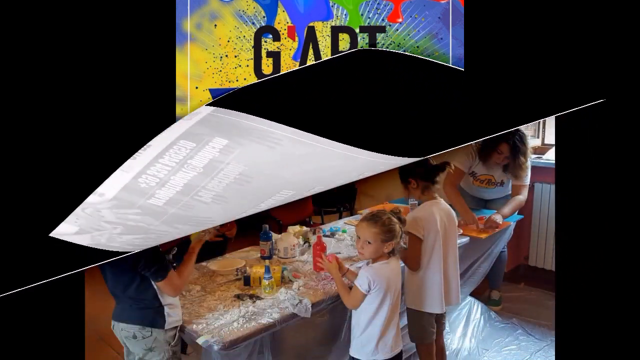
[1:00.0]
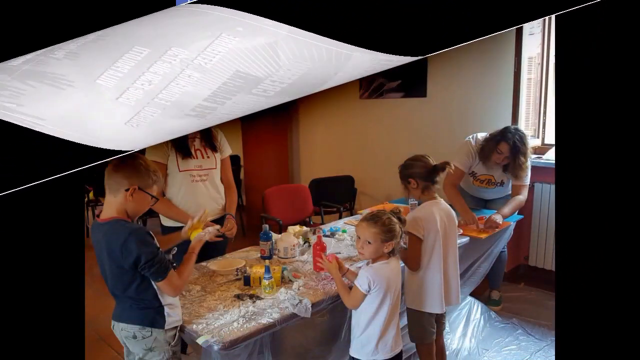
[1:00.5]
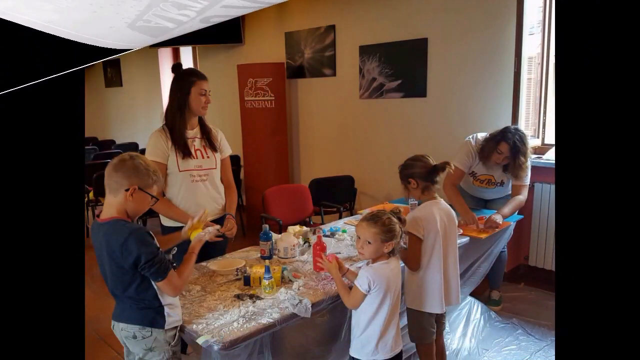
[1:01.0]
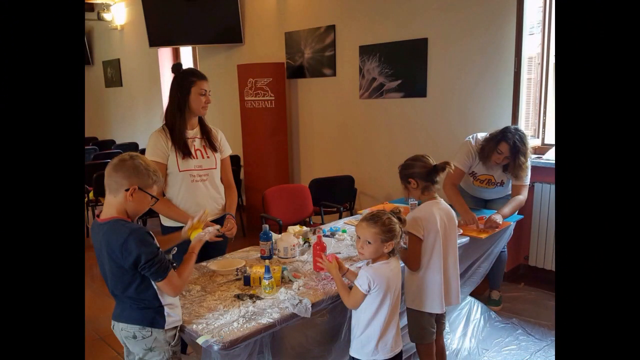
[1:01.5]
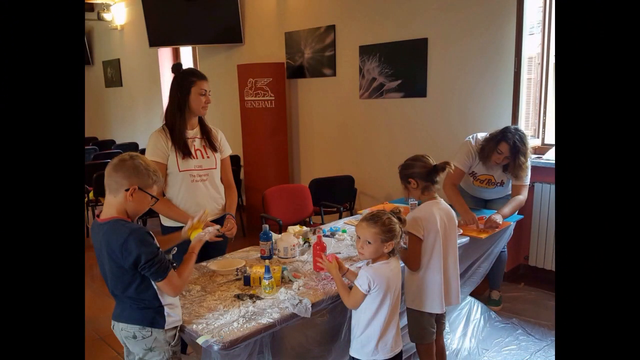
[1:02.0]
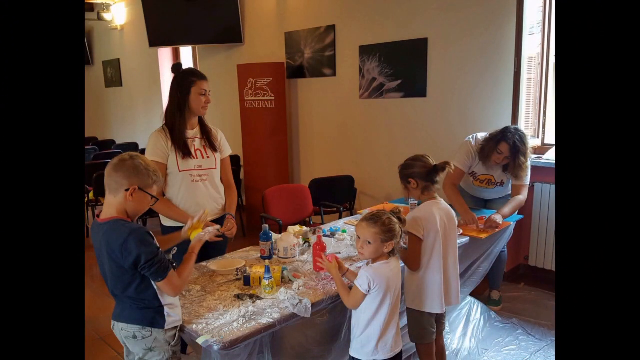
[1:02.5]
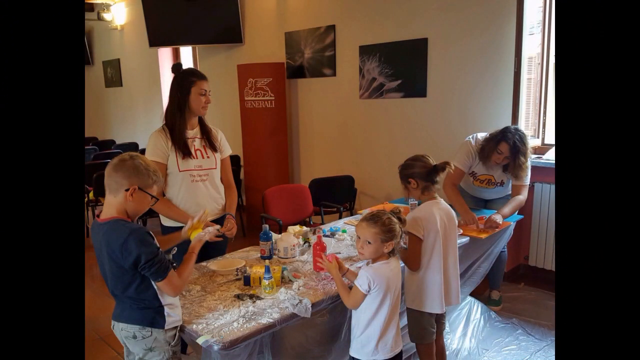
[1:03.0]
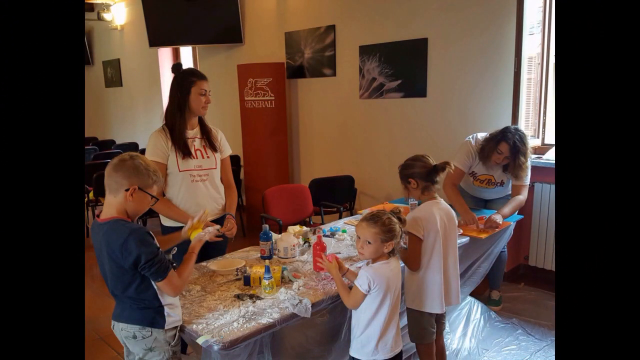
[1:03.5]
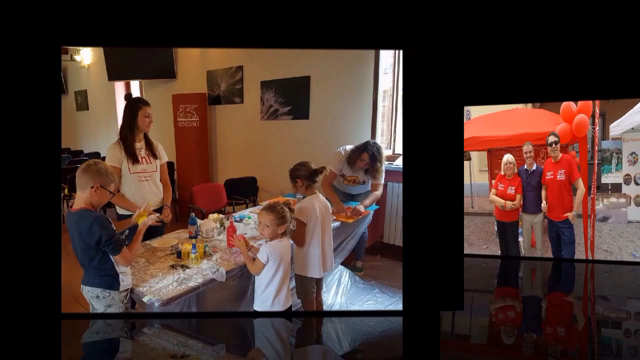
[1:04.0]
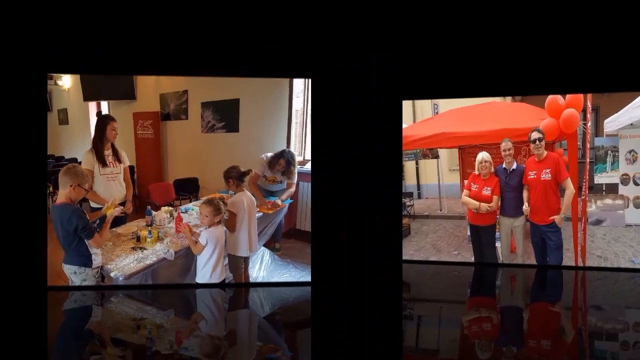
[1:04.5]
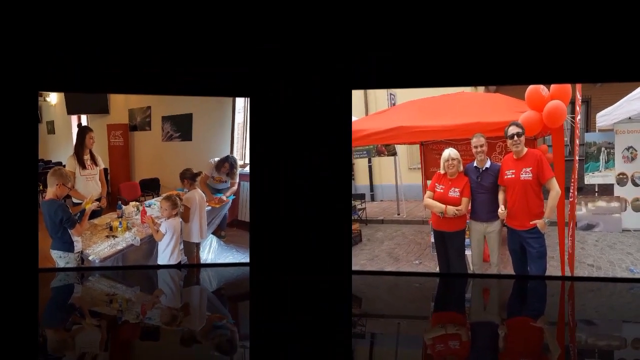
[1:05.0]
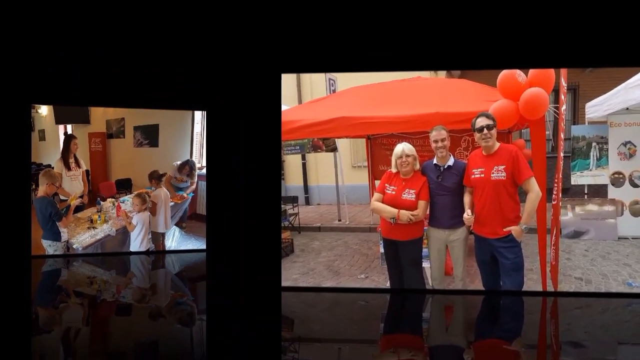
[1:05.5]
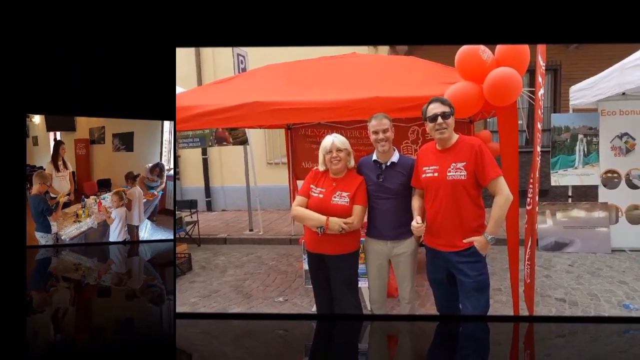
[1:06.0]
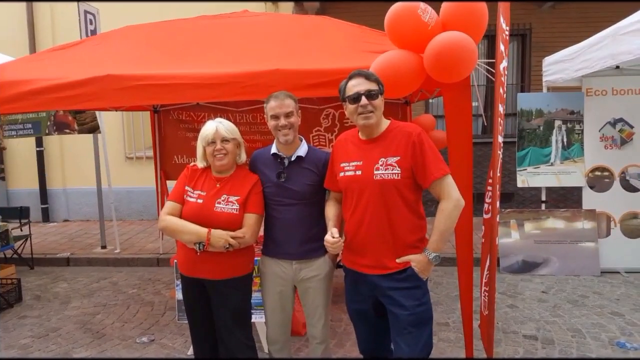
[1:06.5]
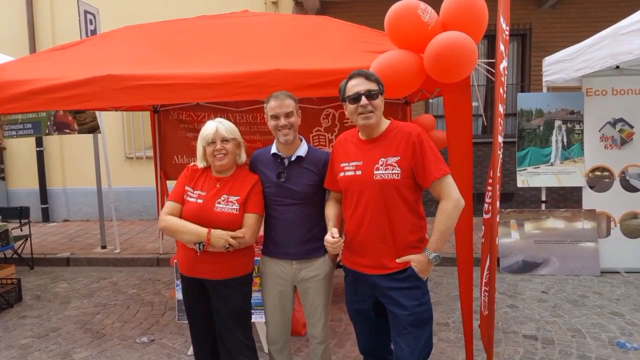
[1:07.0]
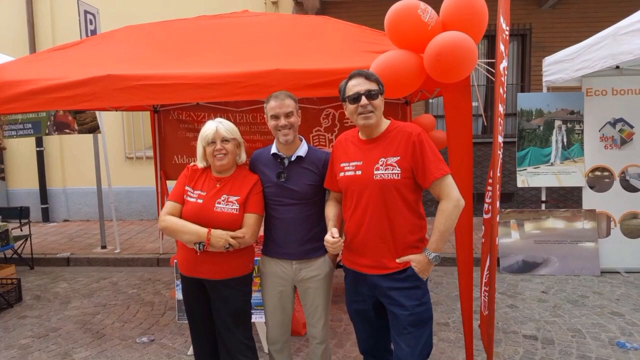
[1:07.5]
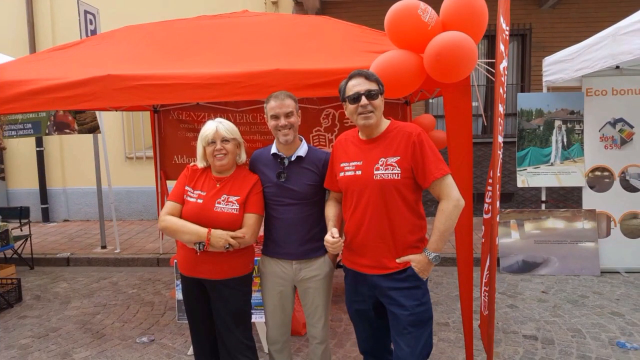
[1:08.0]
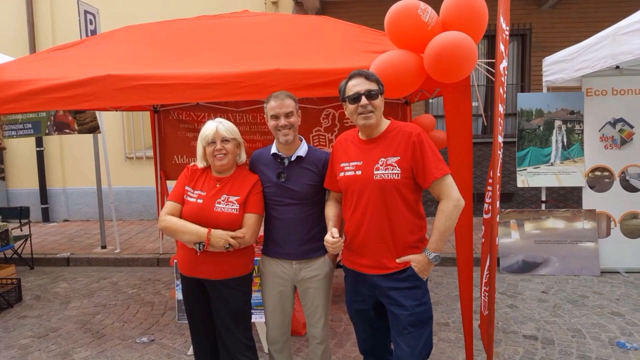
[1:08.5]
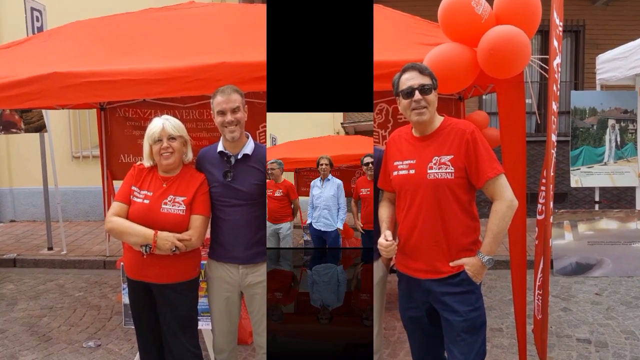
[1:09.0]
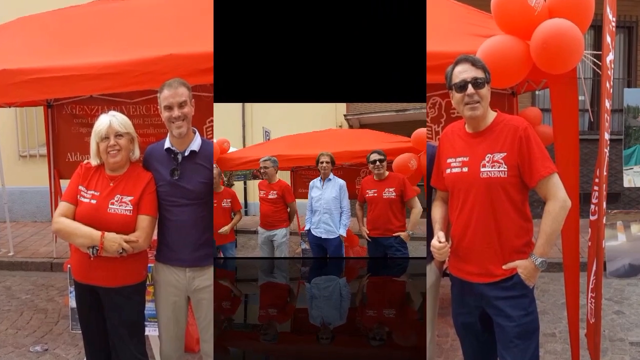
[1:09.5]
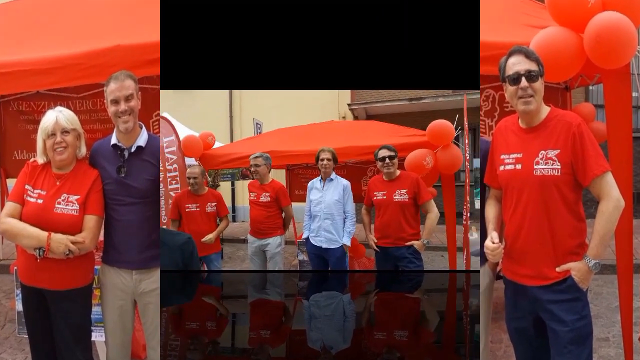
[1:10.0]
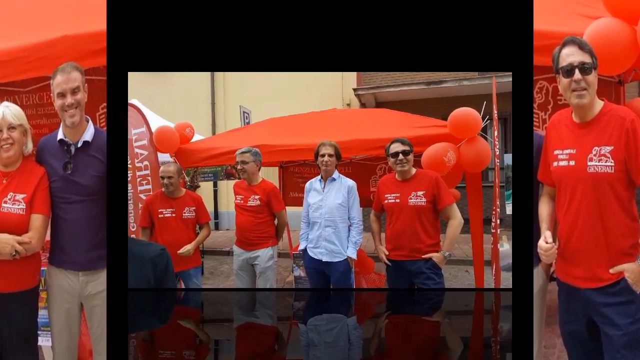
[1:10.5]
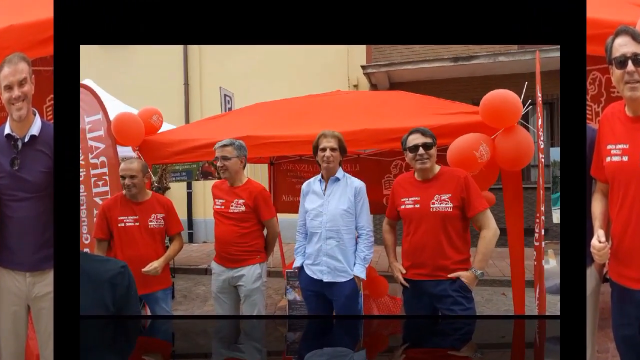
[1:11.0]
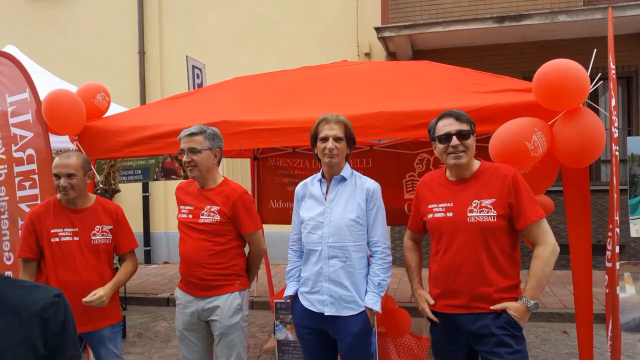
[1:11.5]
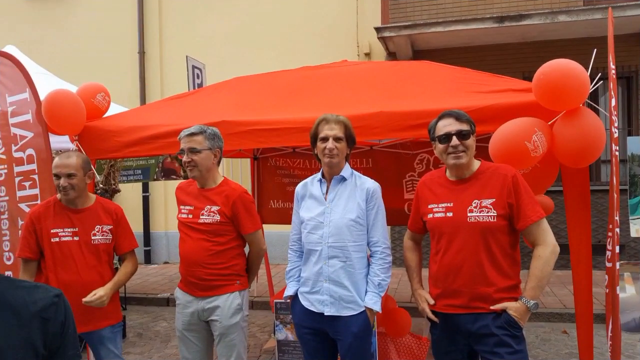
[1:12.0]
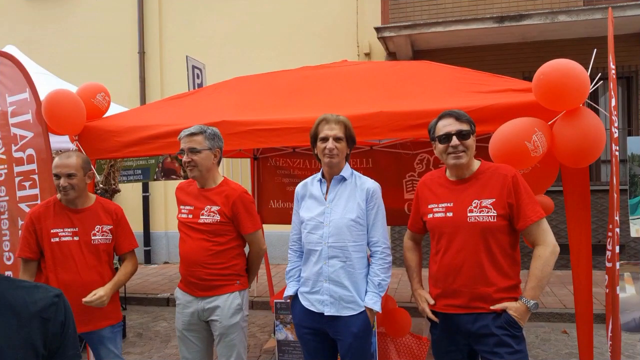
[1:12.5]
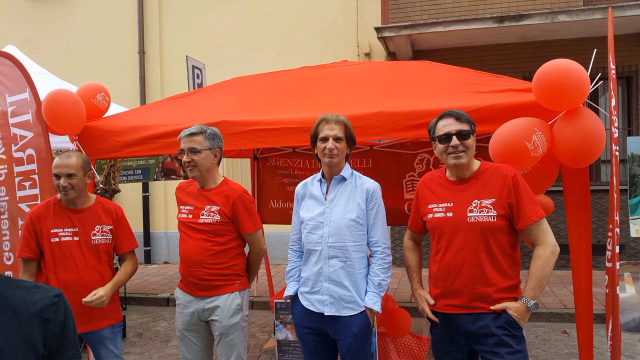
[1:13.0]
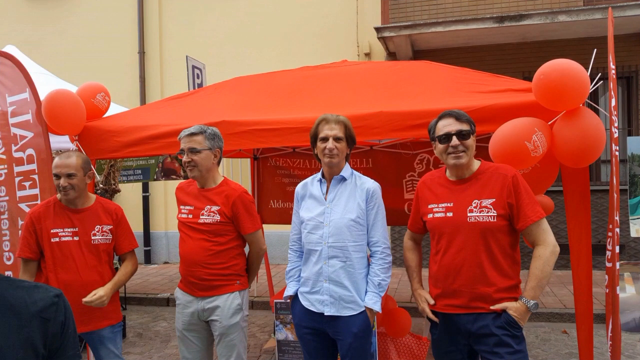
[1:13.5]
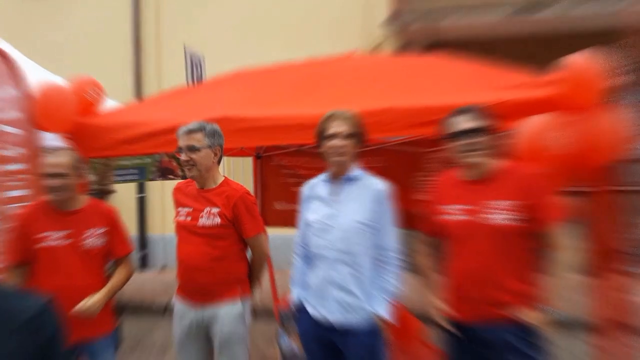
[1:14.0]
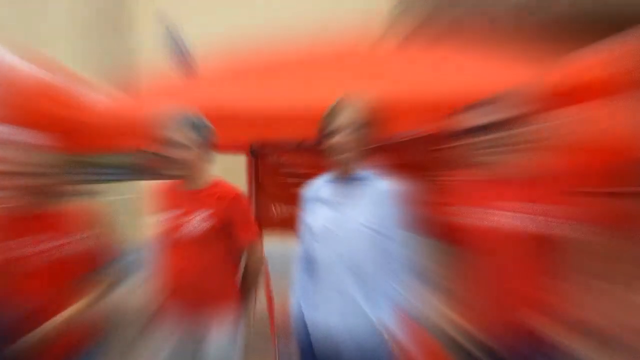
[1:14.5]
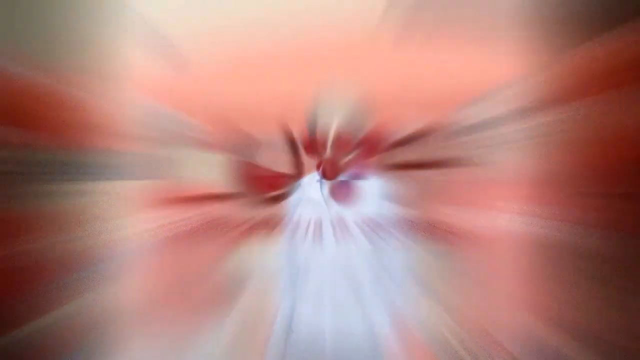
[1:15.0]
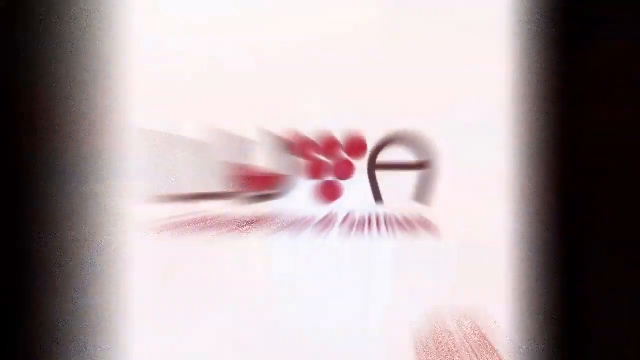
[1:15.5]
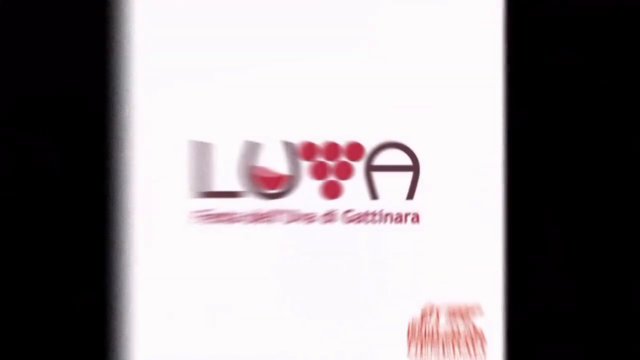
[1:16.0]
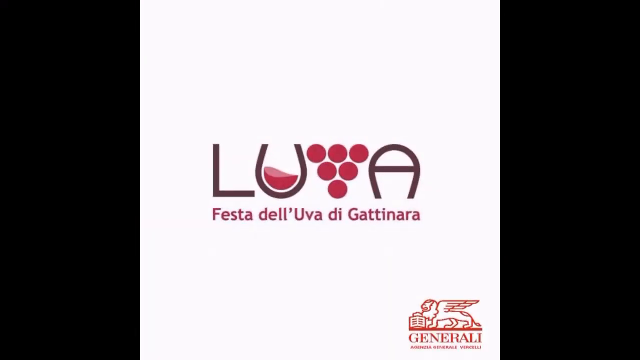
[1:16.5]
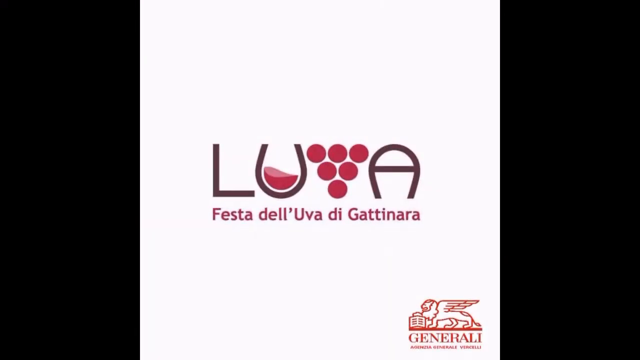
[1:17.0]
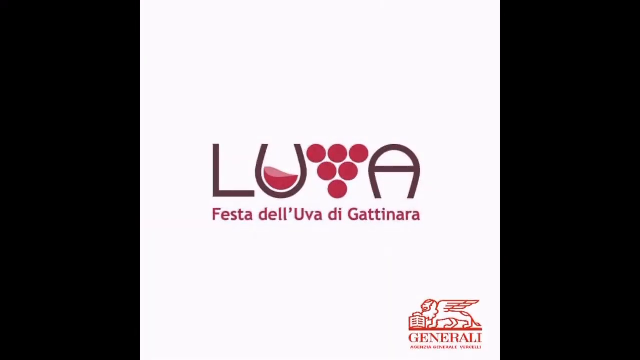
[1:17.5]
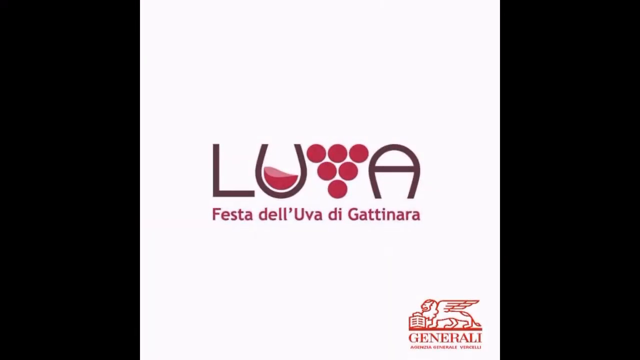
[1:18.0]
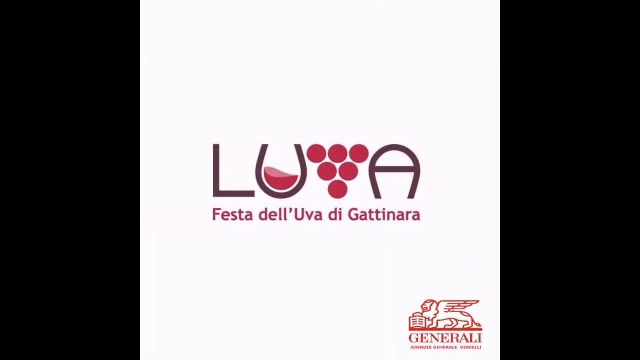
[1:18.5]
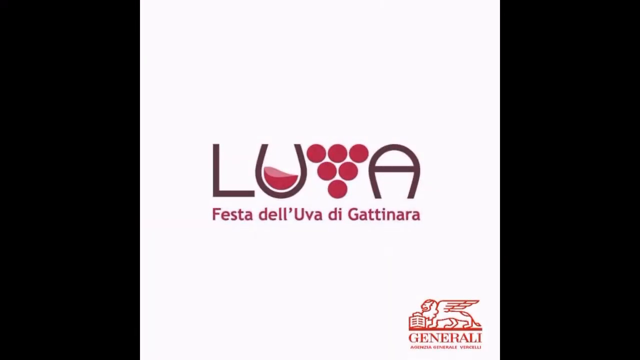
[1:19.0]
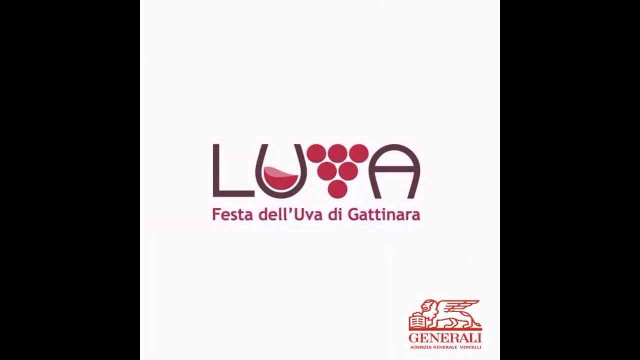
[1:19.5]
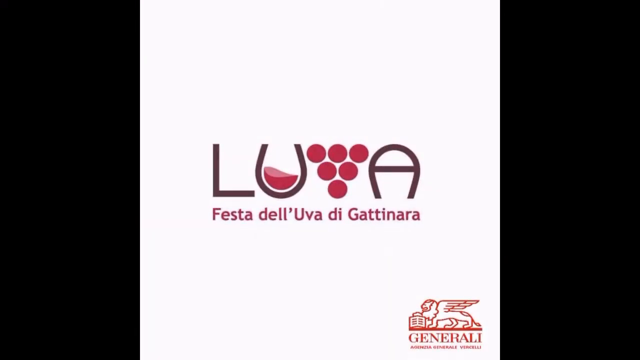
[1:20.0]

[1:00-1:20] A picture shows some children inside a building slowly putting together art projects while two young women oversee how the children are doing. The video cuts back to the booth, where another three people stand in front of it, with people in red shirts, and then to the booth again with four men, three of them in red t-shirts and one in a long-sleeve, blue, collared button-down shirt. The PowerPoint presentation then goes back to the logo for the Louvre festival, apparently a wine festival judging by the logo, with the U resembling a wine glass with wine in it and the V made of grapes bunched together. The logo stays on screen until the end of the video.